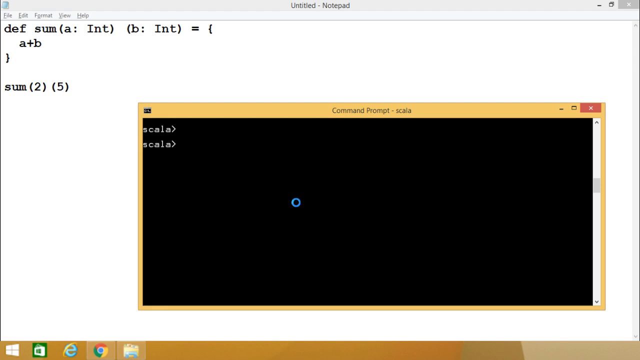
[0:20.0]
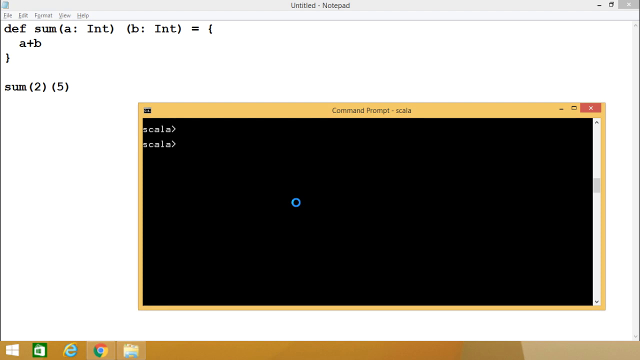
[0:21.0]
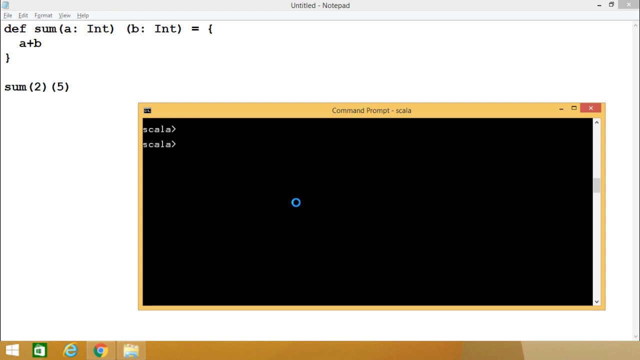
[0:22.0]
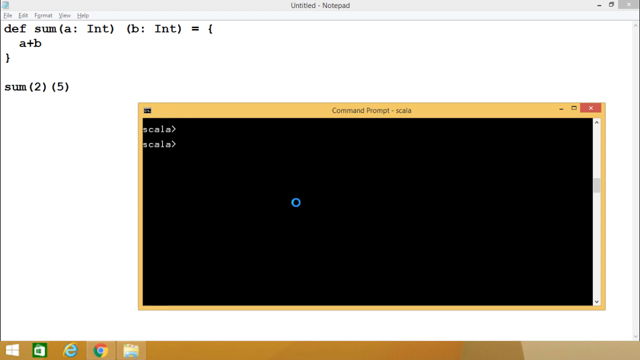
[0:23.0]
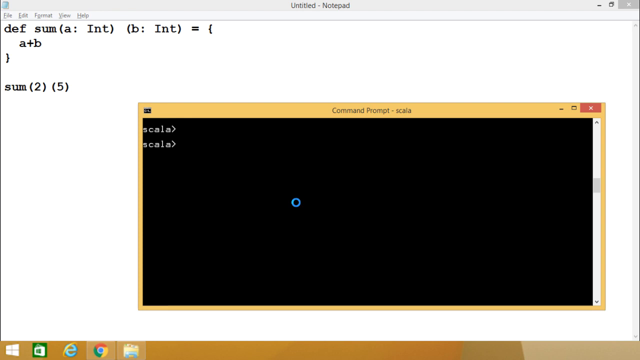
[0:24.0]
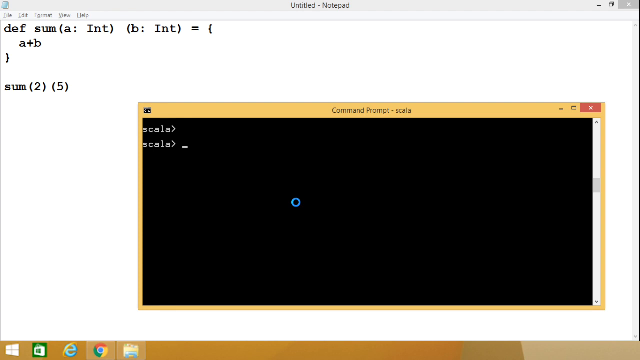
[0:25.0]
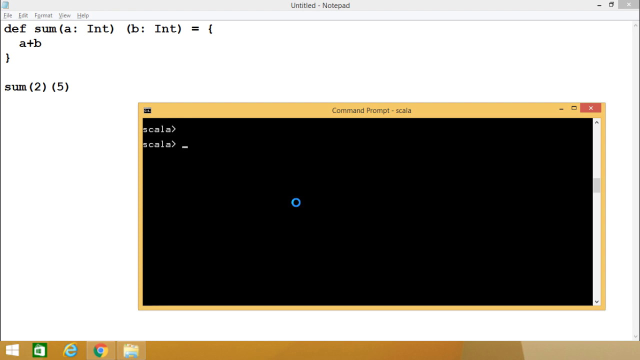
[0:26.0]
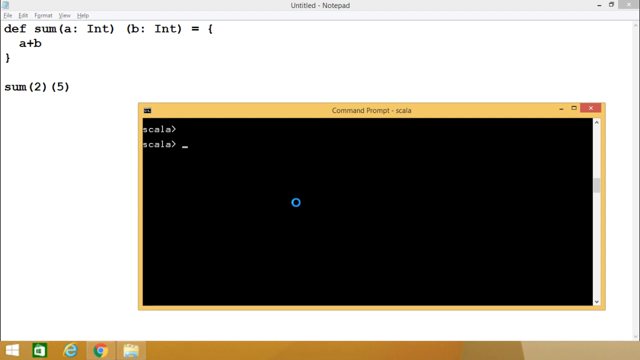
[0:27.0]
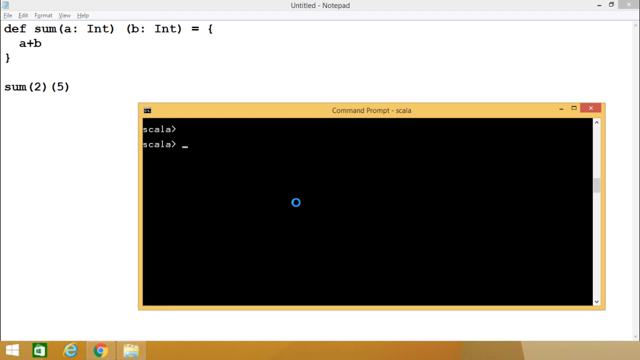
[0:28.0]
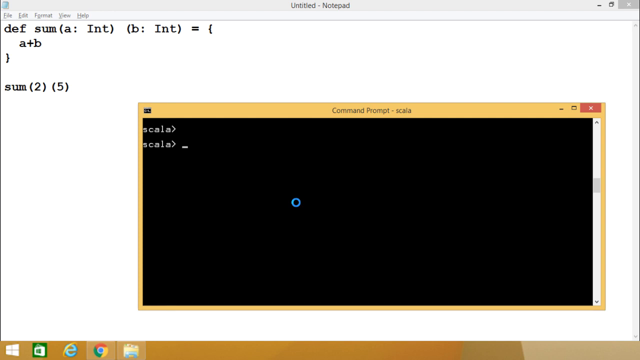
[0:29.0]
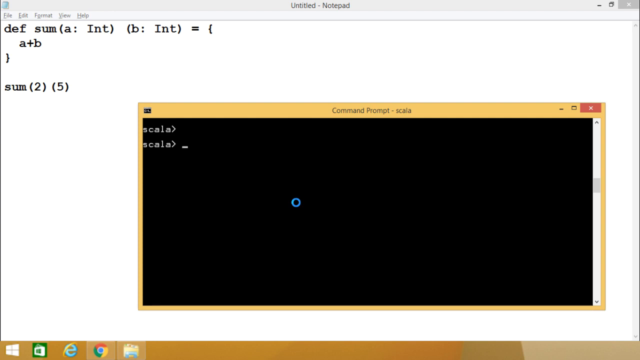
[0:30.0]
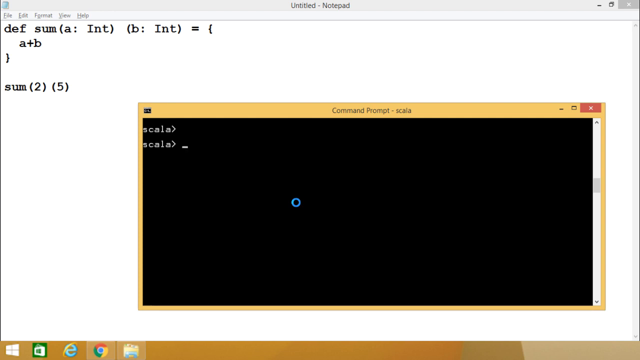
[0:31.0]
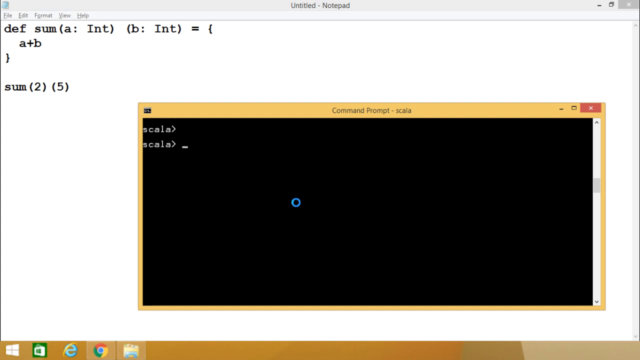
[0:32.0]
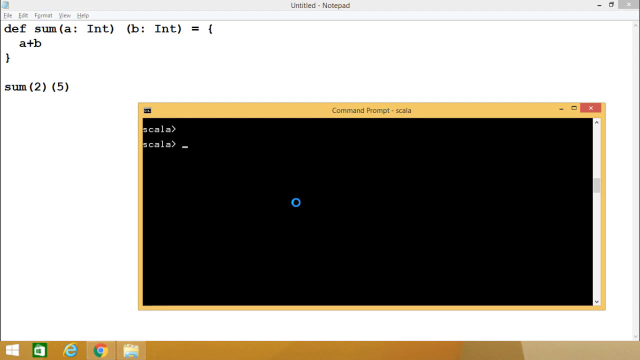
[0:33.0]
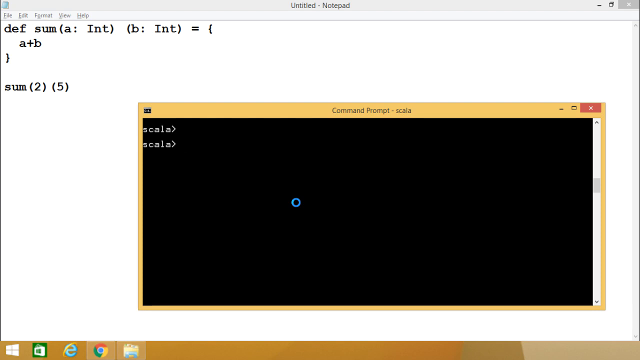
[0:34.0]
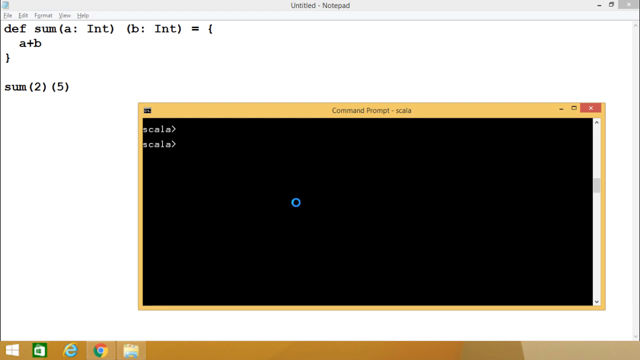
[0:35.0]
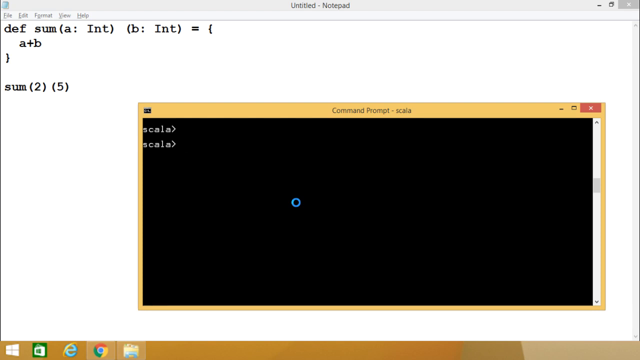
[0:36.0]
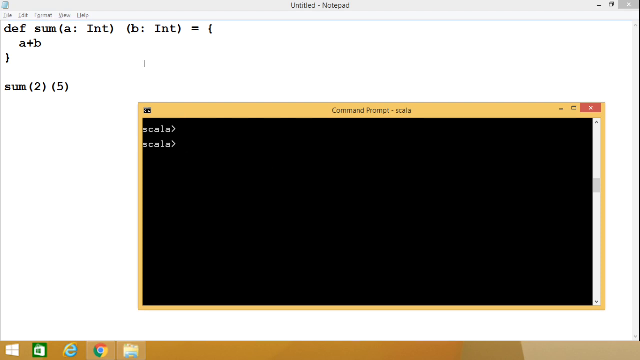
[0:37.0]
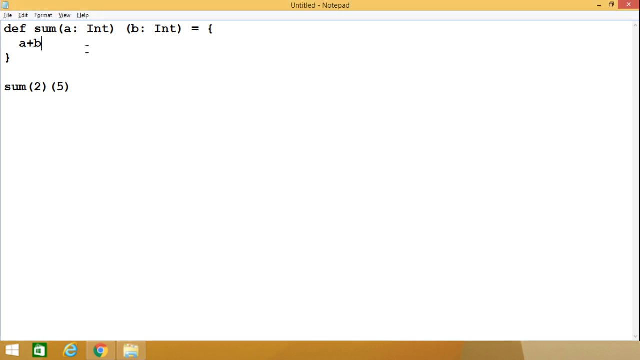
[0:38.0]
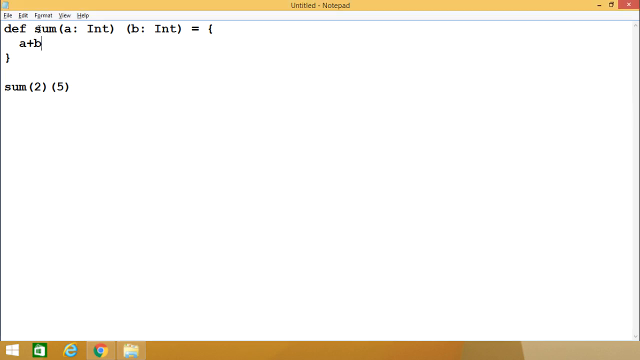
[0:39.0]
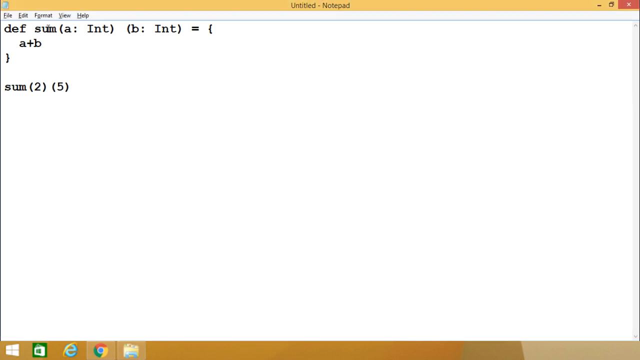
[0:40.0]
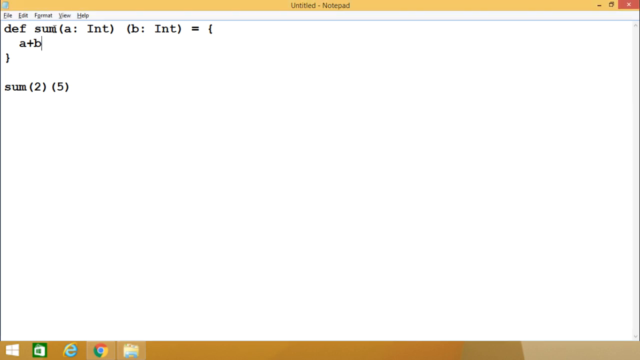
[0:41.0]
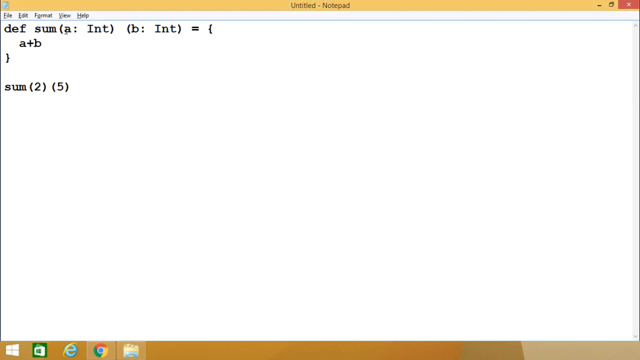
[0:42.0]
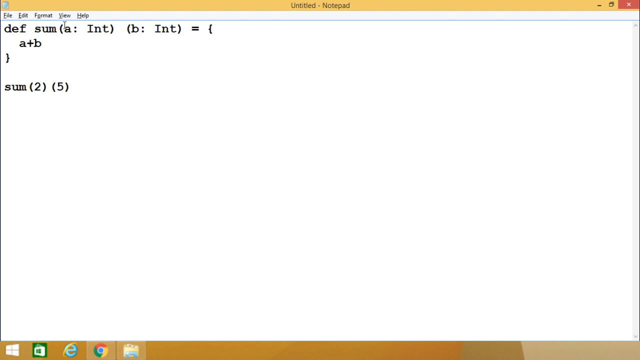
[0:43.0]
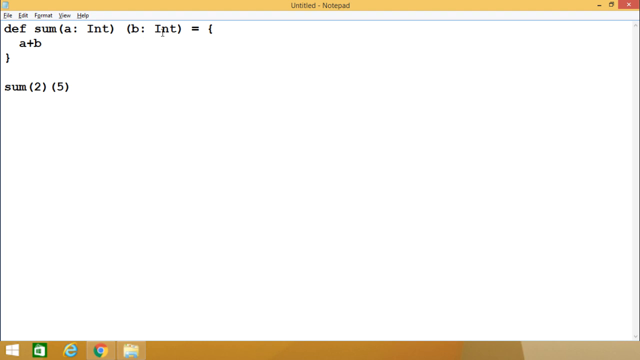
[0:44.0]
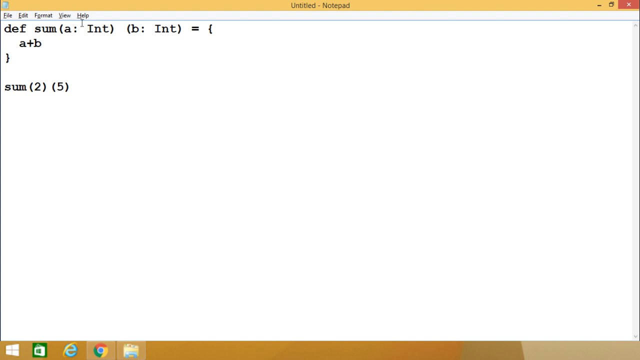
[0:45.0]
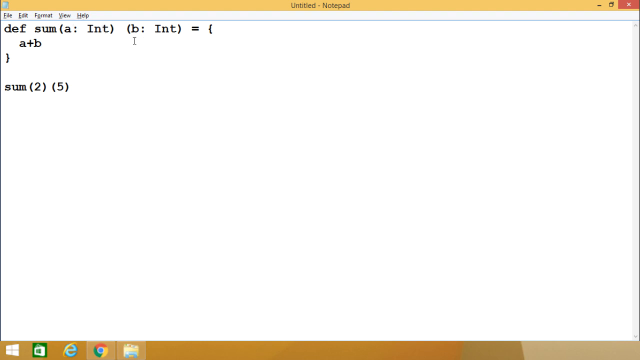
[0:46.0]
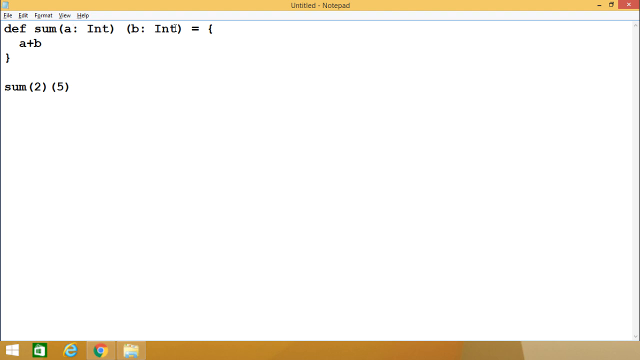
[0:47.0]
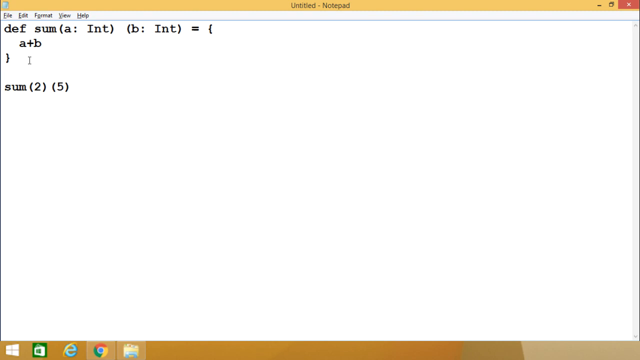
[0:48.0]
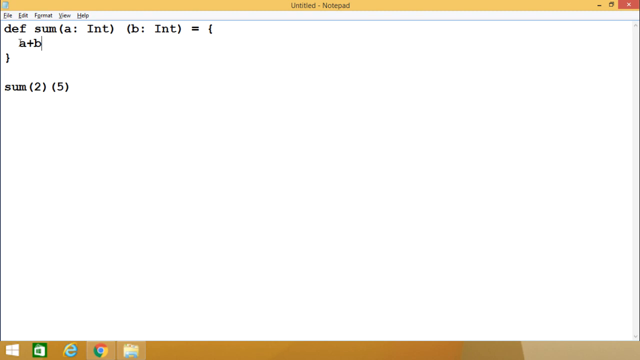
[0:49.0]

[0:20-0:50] The video stays on the same page for about 25 seconds until the mouse finishes loading, changing from a small, spinning blue circle to an arrow. Meanwhile, a cursor keeps blinking after the second "Scala". The mouse moves from the center of the page to the upper left corner, pauses briefly on "Sum", and slowly moves from left to right along that line, going back and forth twice. When the mouse moves over the characters, it briefly changes to a vertical line. When the mouse moves to this area, the blackboard in the middle of the screen disappears. The mouse then moves slightly downward and highlights "A + B" in blue. Suddenly, the blackboard that had disappeared reappears, while the rest of the page remains unchanged. It could be a very detailed tutorial; the video progresses very slowly, without many noticeable changes.